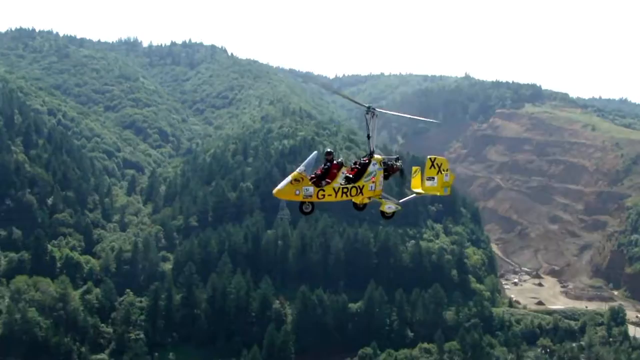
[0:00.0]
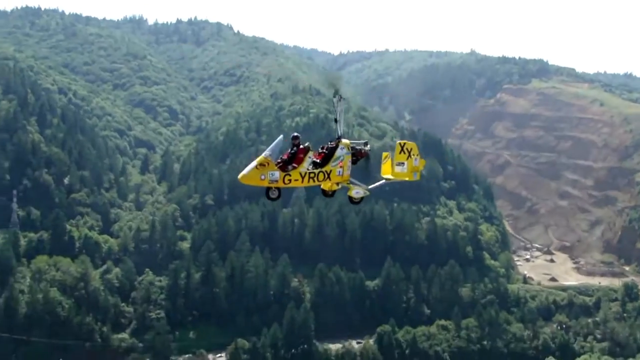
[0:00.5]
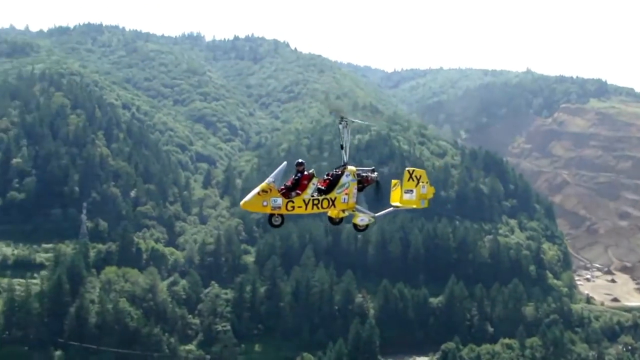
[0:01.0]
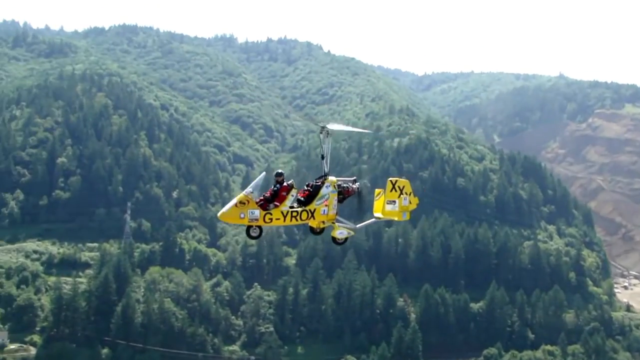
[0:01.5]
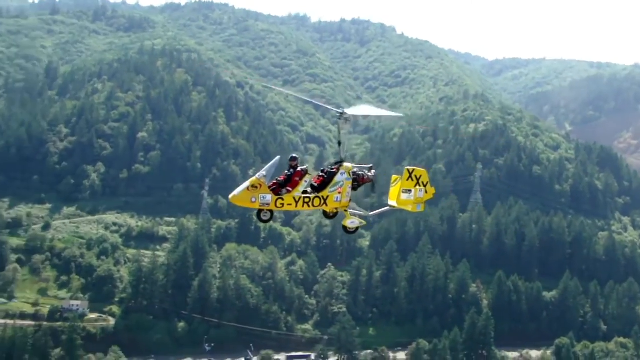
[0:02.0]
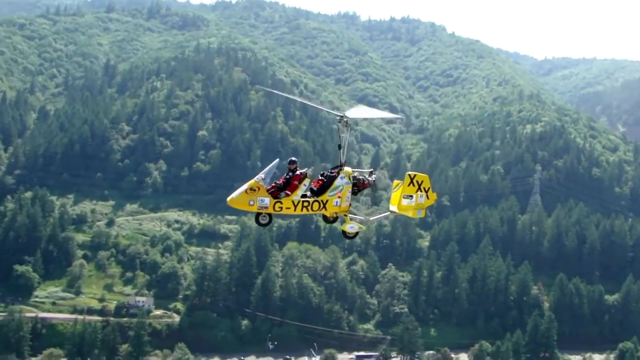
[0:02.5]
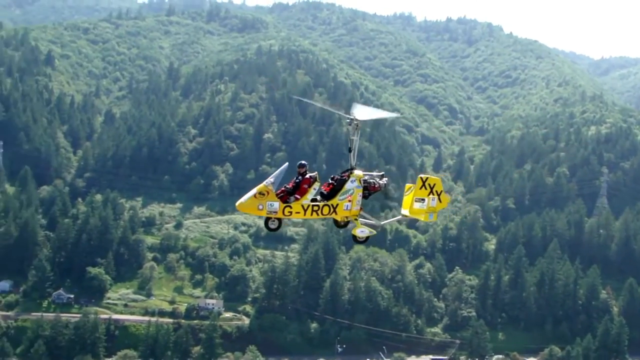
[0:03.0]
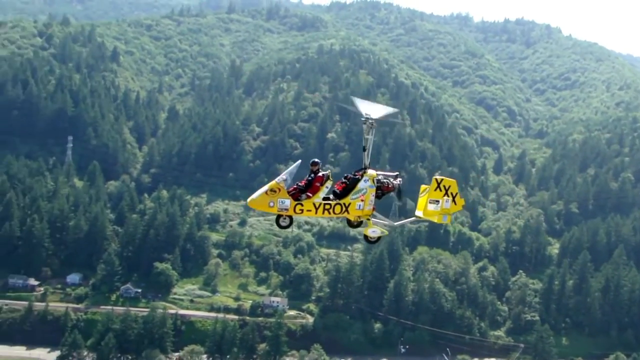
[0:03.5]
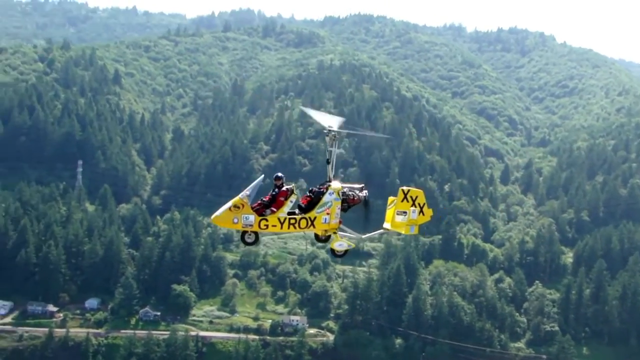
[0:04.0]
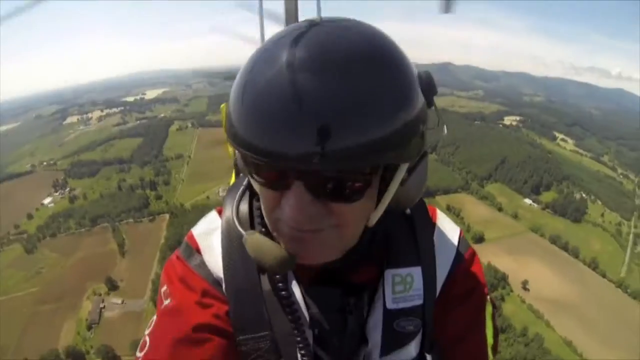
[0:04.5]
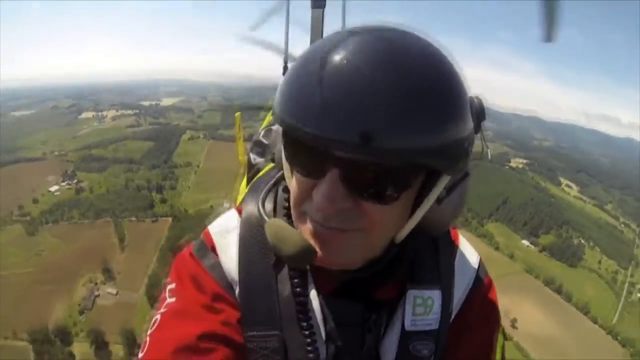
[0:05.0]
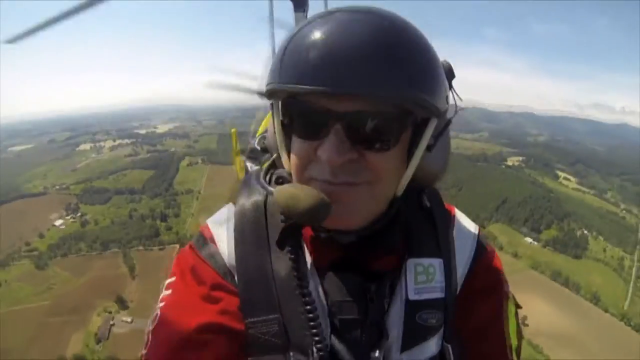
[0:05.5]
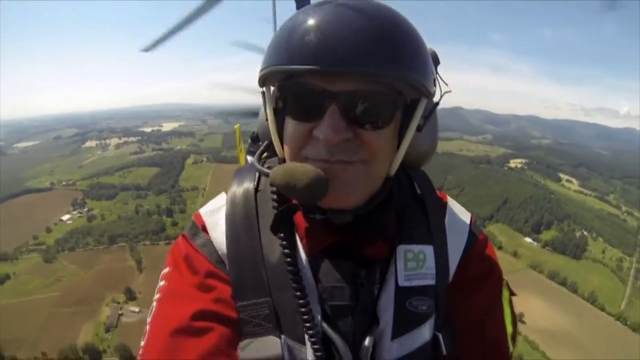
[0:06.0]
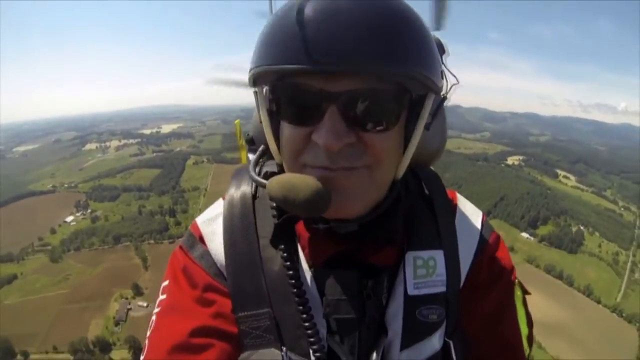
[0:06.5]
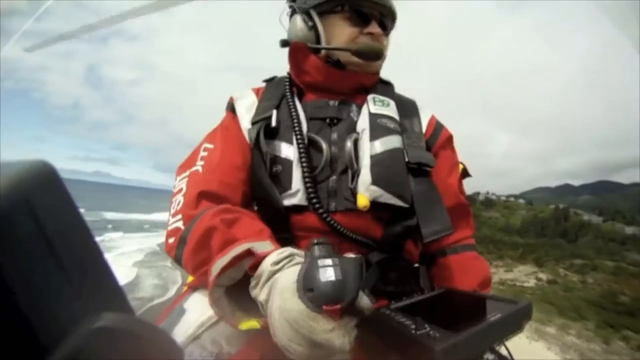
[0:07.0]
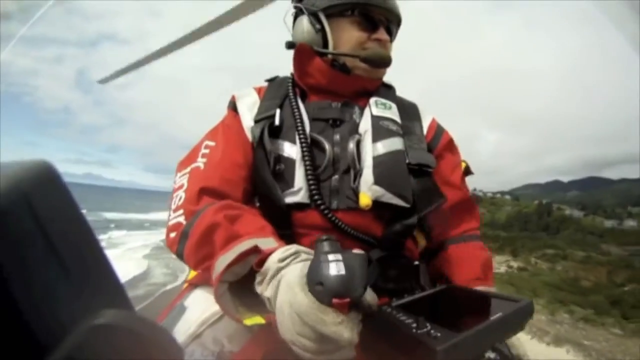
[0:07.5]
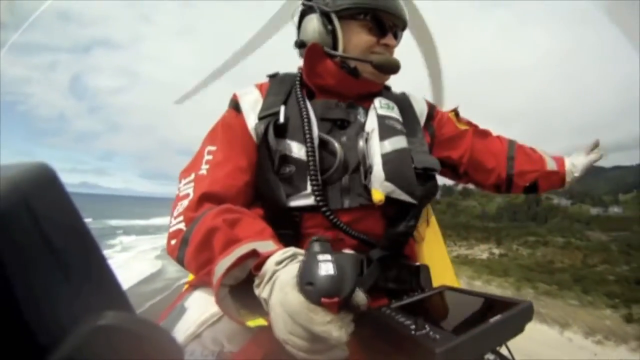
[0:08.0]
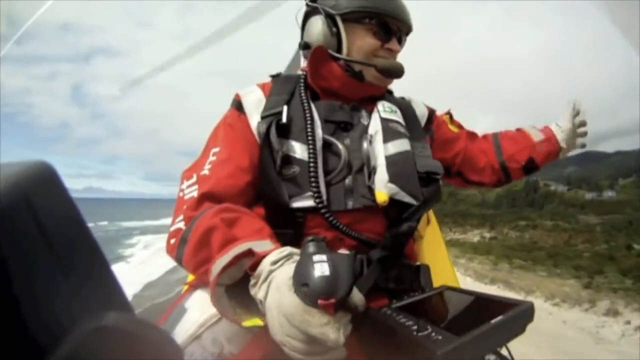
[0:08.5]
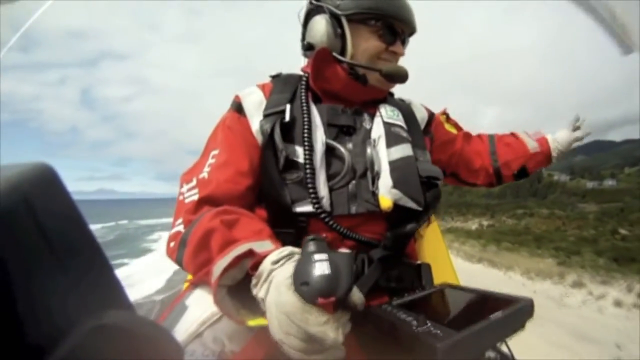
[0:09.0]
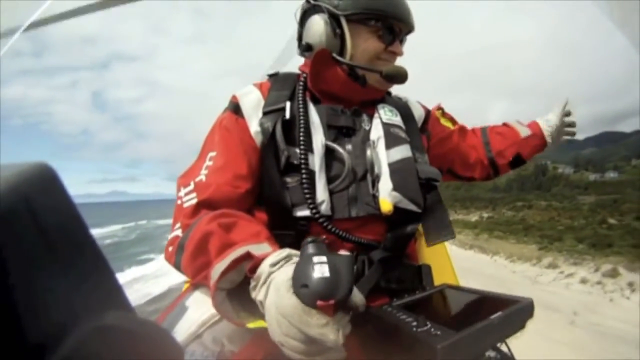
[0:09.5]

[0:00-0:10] A very small helicopter, apparently a two-person craft, flies with a very long spinning blade. It looks somewhat like a three-wheeled motorcycle, like half of a helicopter. It has wording on the side that reads "GYROX", and it is yellow. It has a windshield but no top, so the pilot is not shielded from the wind at all. The pilot is an older Caucasian man wearing a helmet, sunglasses, and the red suit that pilots wear, with what looks like a big green microphone in front of him. He also appears to have a parachute on. As he flies over, he seems to wave at some people. Mountains are visible behind him, along with what look like mines, possibly old mining or some type of ore mining.